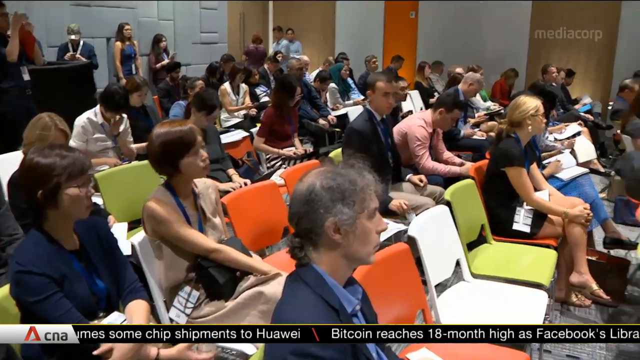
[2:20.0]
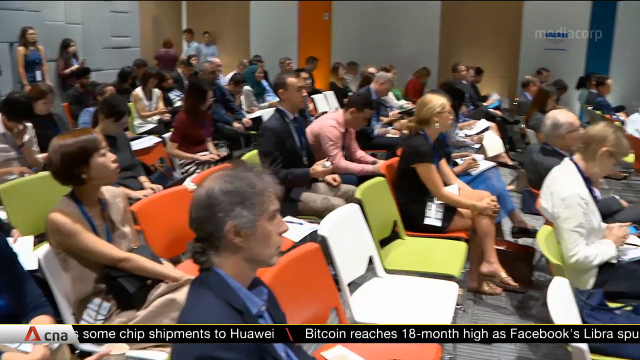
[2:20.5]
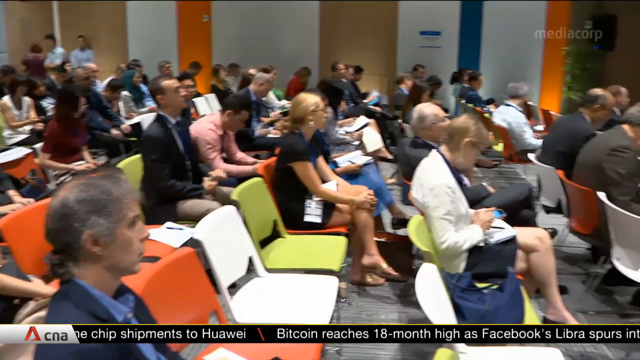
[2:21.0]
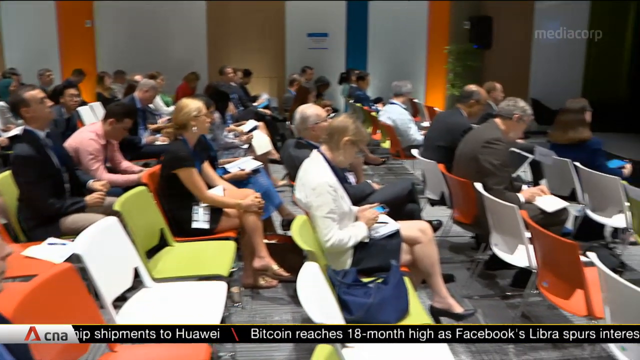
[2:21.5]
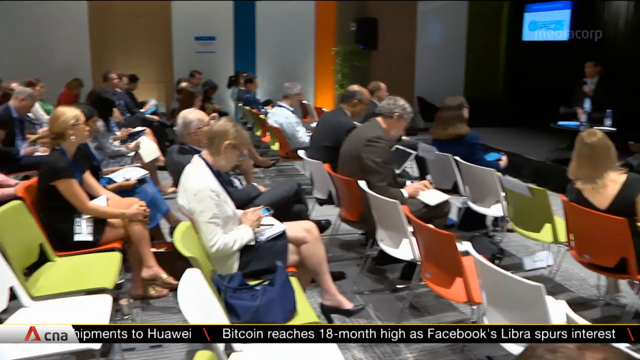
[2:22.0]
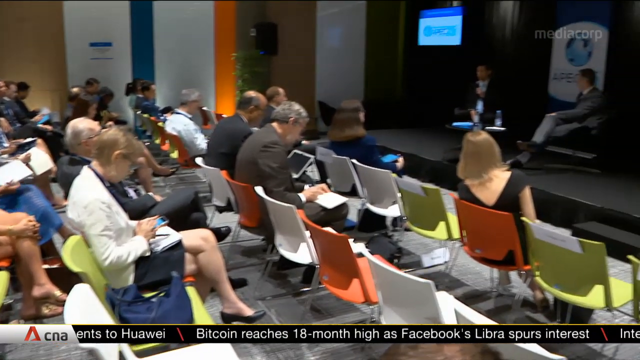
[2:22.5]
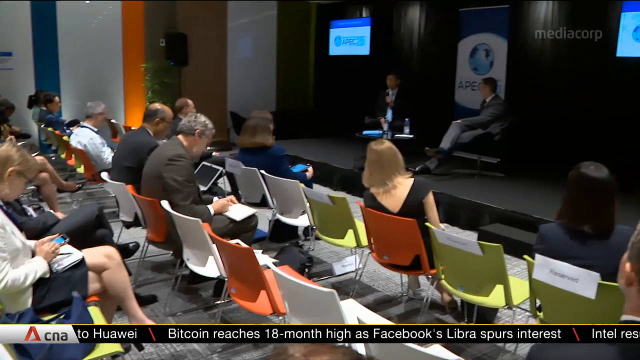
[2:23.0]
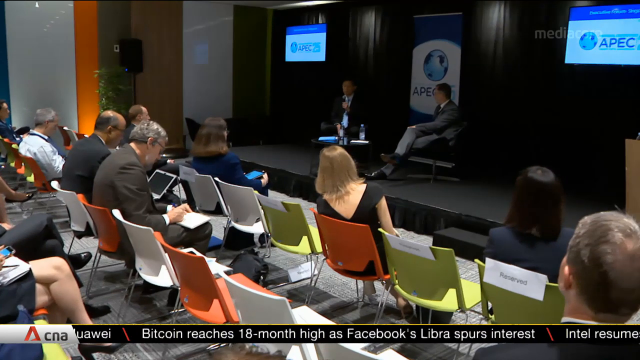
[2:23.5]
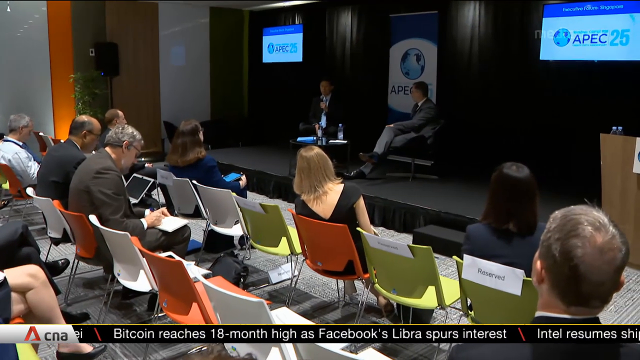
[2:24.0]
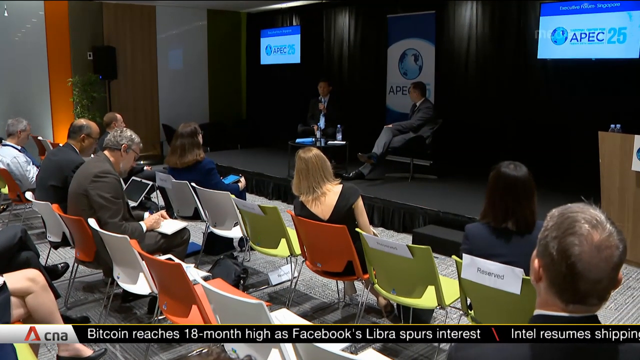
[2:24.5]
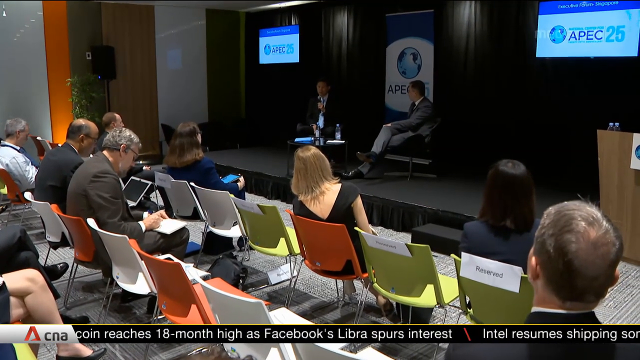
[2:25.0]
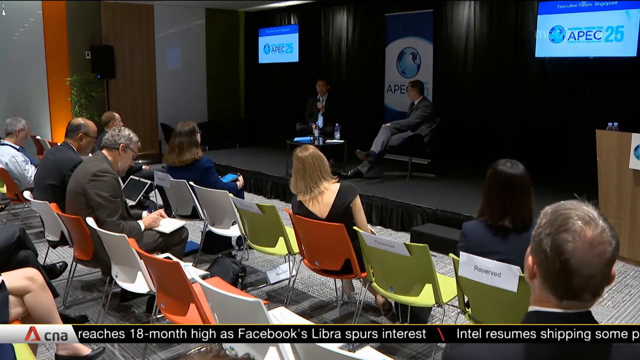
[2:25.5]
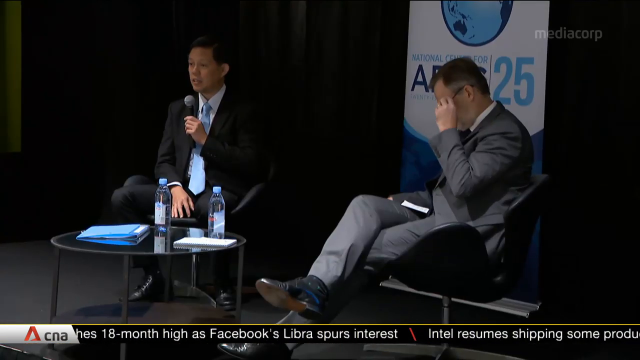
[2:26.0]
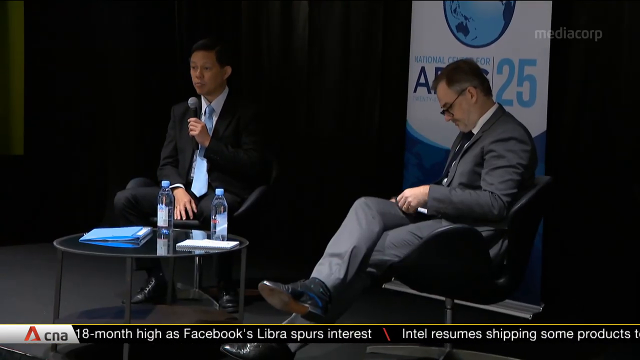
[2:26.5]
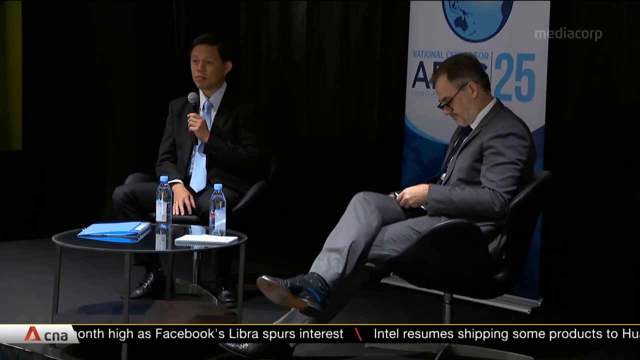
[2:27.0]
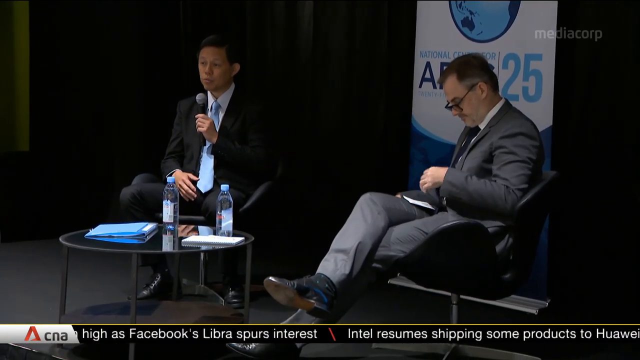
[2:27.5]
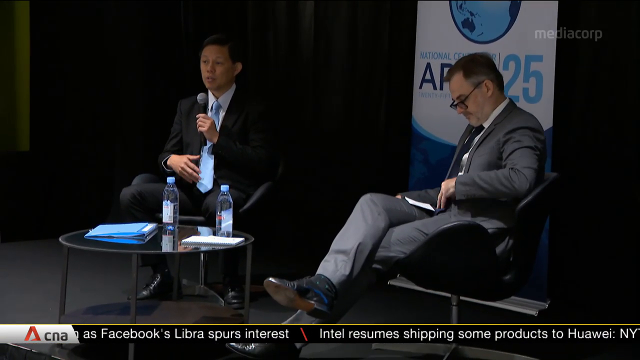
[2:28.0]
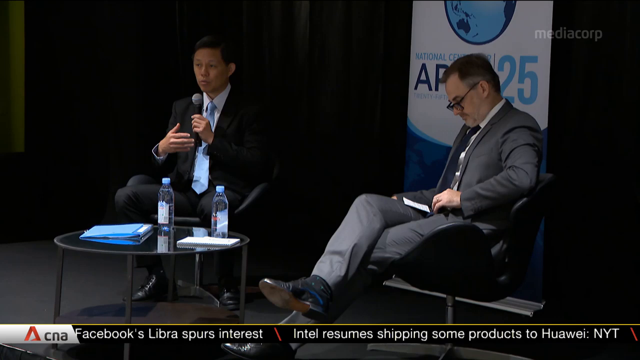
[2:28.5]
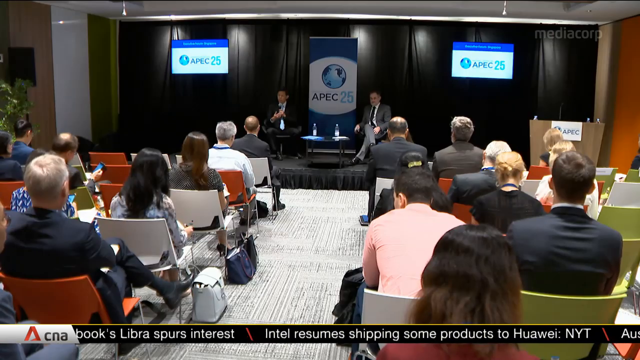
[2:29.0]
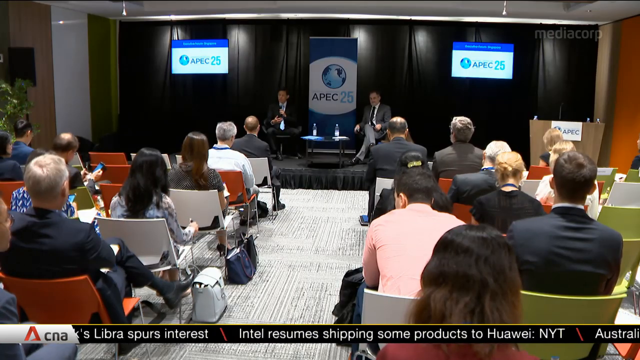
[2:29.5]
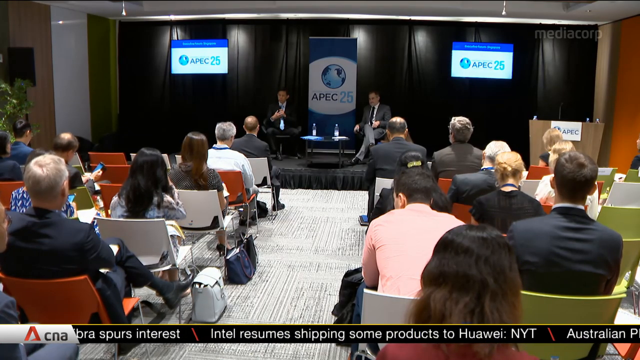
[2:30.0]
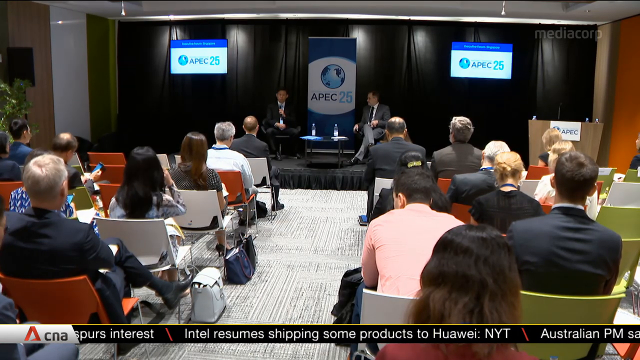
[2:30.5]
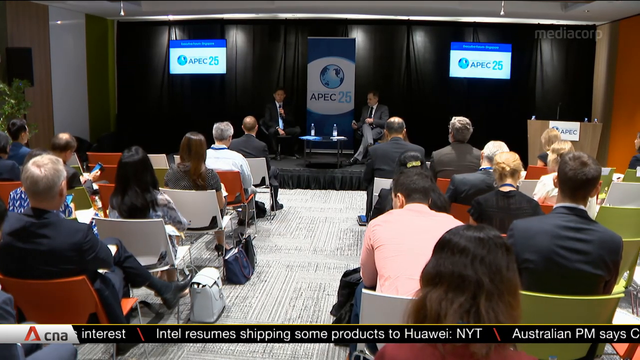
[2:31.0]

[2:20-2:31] The camera pans across the entire room of journalists watching the two men speaking on stage. The journalists, men and women who are mostly middle-aged, all look towards the stage and make notes or record what the two men say. The video cuts to a closer shot of the two men. The man on the left speaks into a microphone, with a round table in front of him; each man has a bottle of water and some notes on the table. The man in the grey suit, sitting on the right, looks down at his notes. A wide shot from the back of the room then shows the whole scene: the backs of the journalists sitting on their chairs, and the two men on the slightly raised stage with the screens and the logo reading "APEC 25".